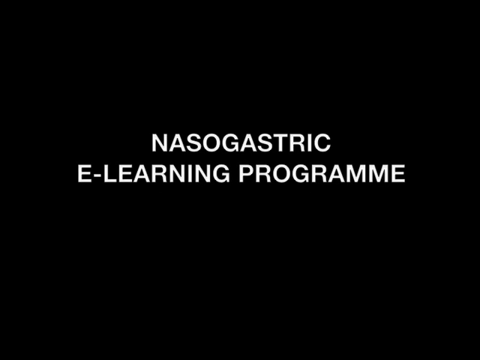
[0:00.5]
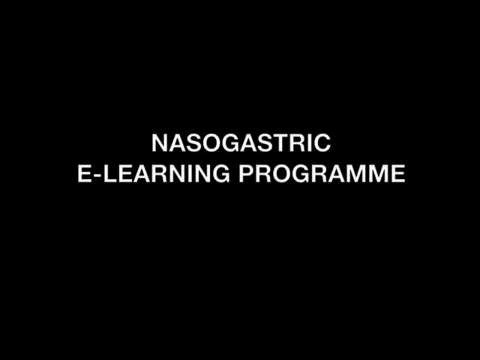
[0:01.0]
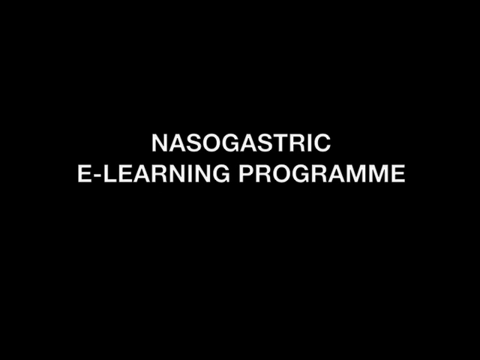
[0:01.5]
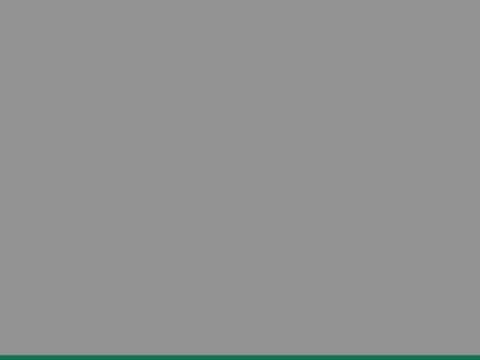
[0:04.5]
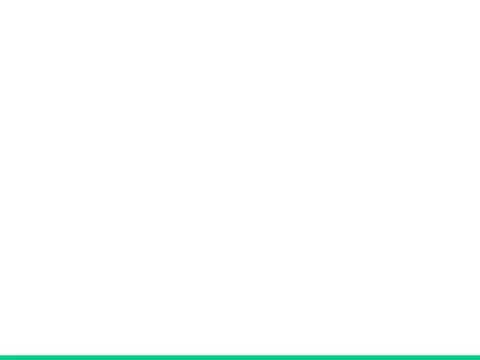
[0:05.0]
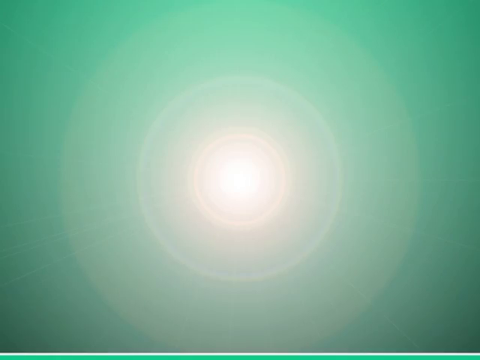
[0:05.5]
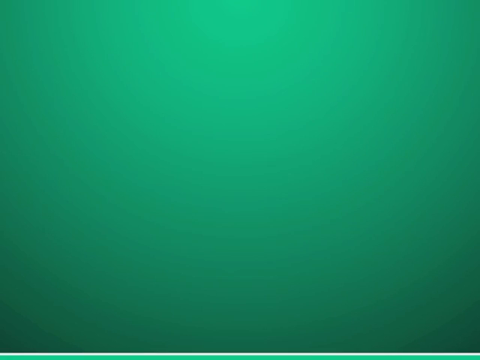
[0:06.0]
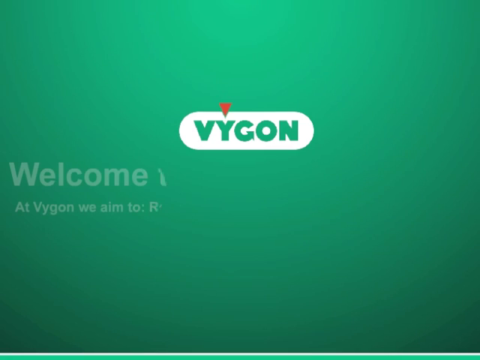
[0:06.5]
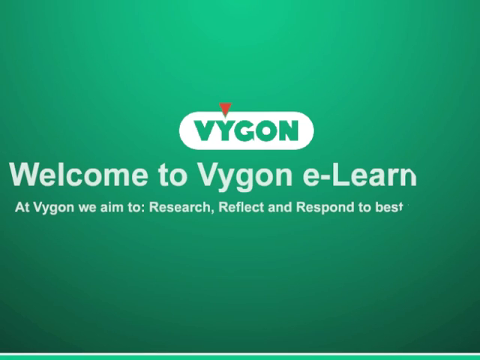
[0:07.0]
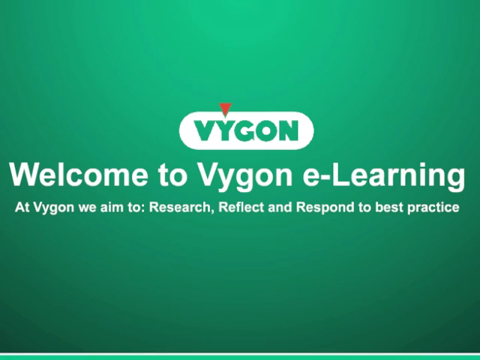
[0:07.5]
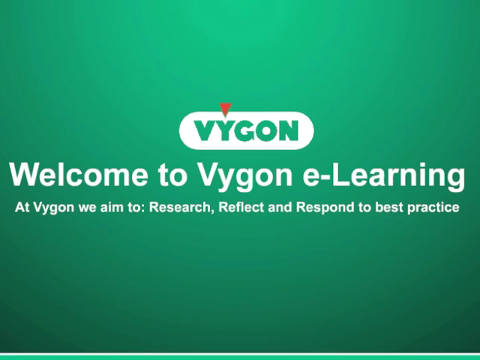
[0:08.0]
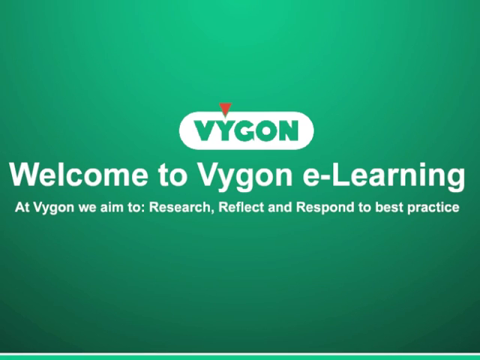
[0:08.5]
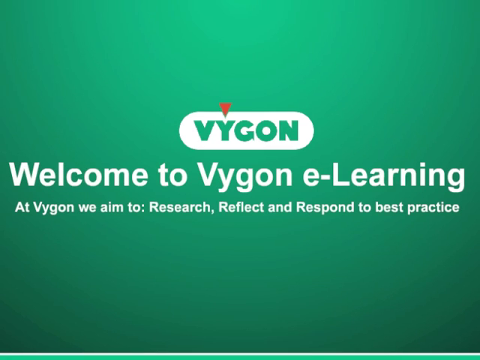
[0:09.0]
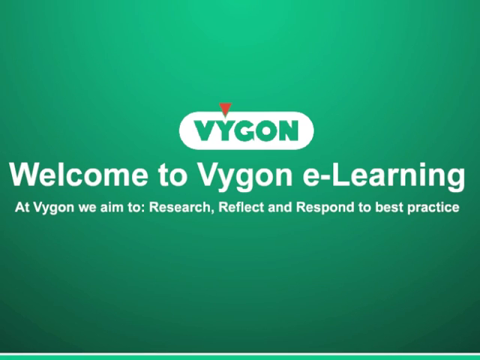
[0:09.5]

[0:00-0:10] The video opens on a black background with white text in all caps: "nasogastric" and, on the next line, "e-learning program". The screen turns black and then bluish green, and a logo appears with the letters V-Y-G-O-N in green on a white ellipse background, with an upside-down reddish-orange triangle above the letter Y. Text appears below the logo from left to right: "Welcome to Vygon E-Learning". Smaller text beneath it reads "At Vygon, we aim to research, reflect, and respond to best practice." A greenish-blue horizontal line runs across the bottom of the screen.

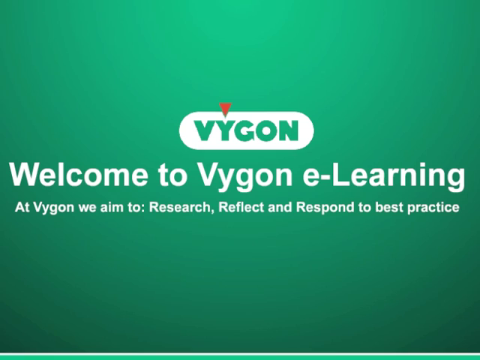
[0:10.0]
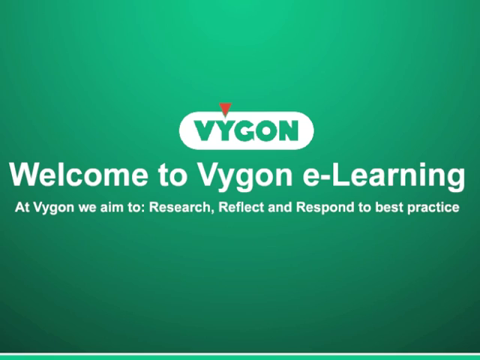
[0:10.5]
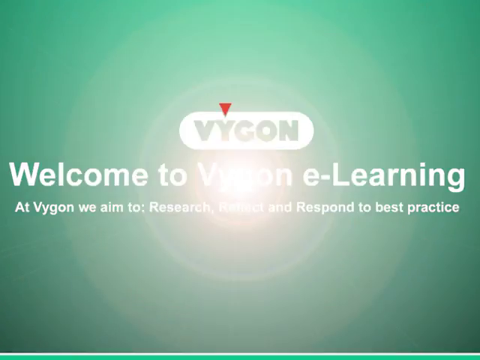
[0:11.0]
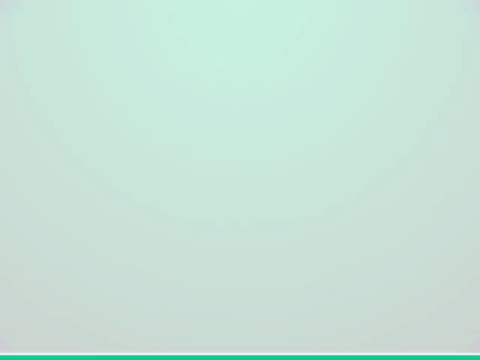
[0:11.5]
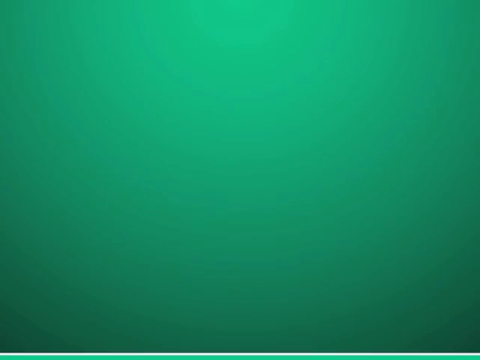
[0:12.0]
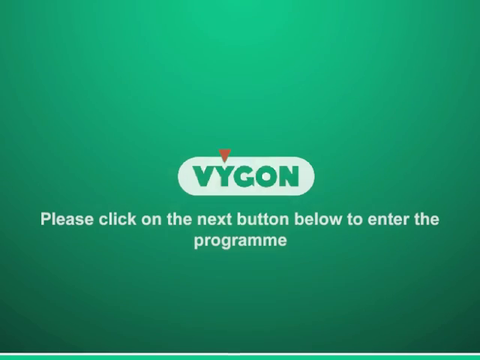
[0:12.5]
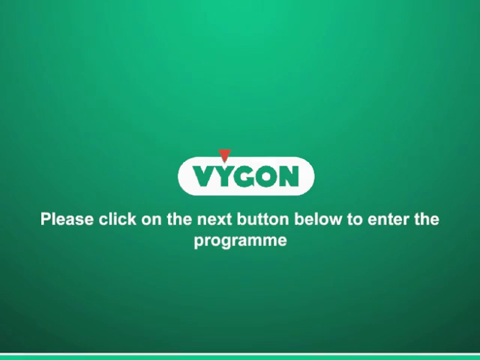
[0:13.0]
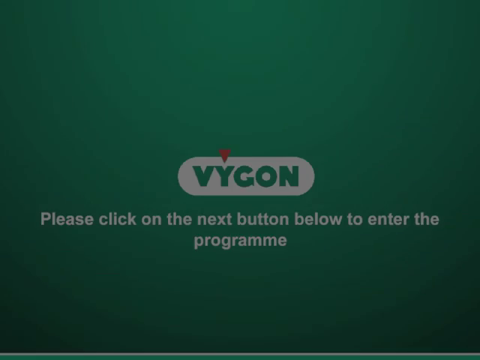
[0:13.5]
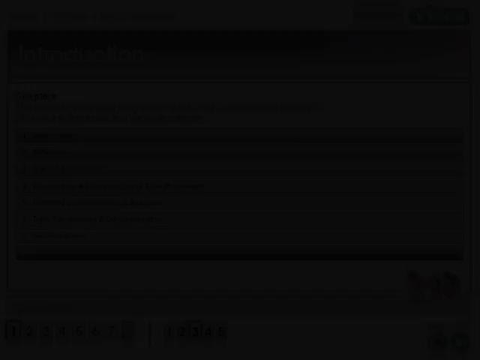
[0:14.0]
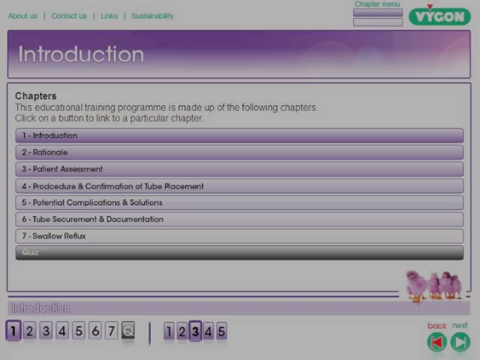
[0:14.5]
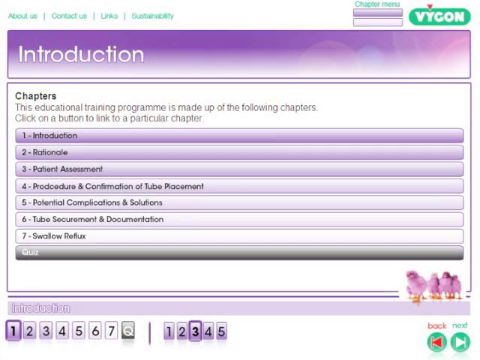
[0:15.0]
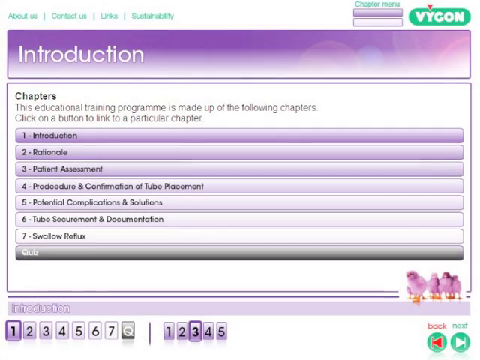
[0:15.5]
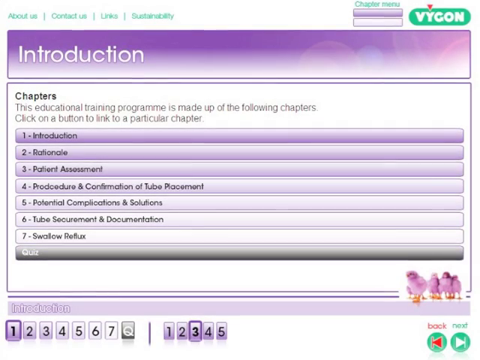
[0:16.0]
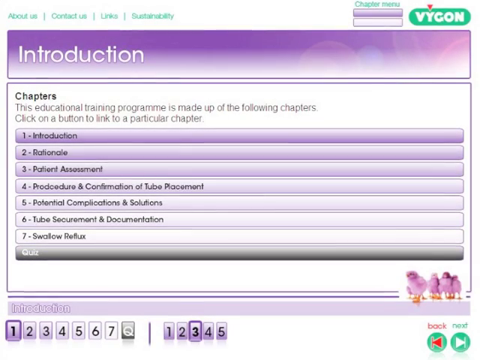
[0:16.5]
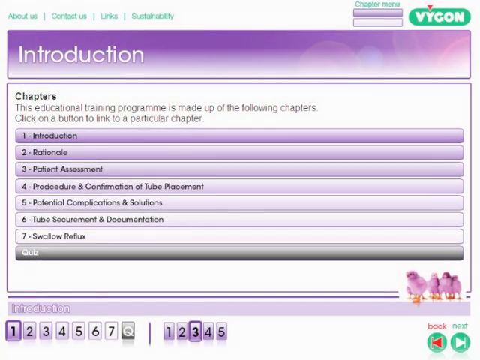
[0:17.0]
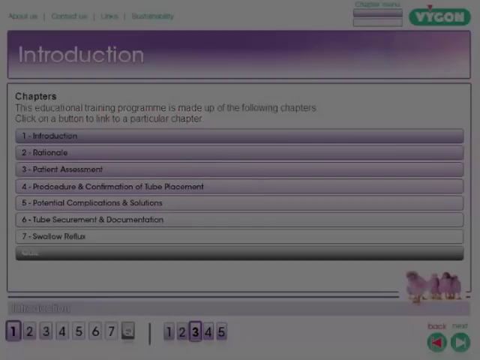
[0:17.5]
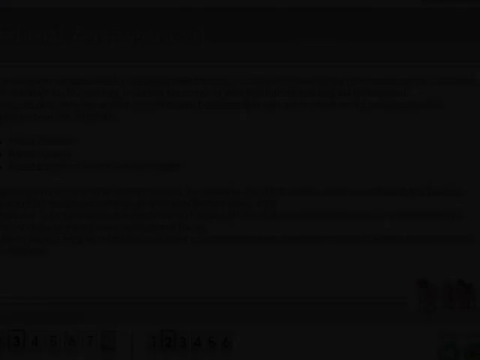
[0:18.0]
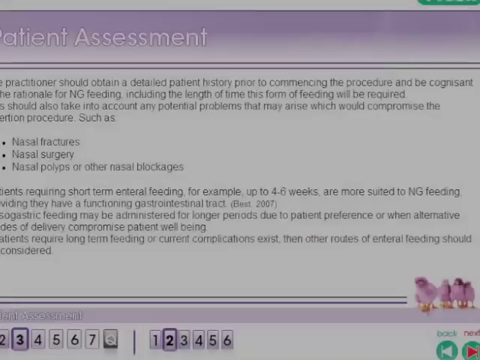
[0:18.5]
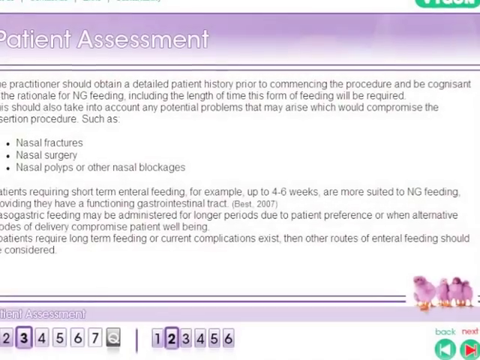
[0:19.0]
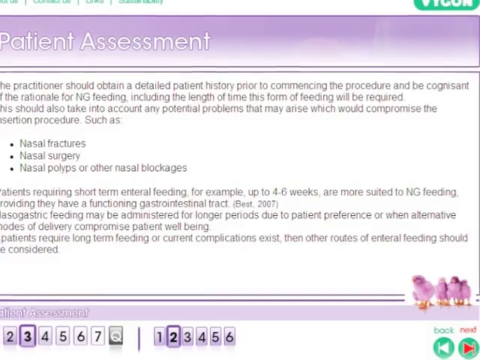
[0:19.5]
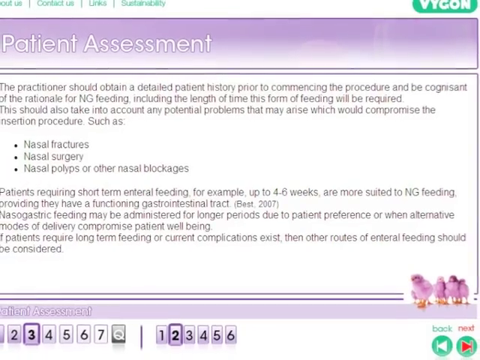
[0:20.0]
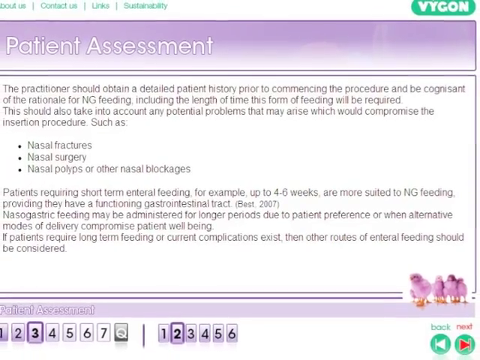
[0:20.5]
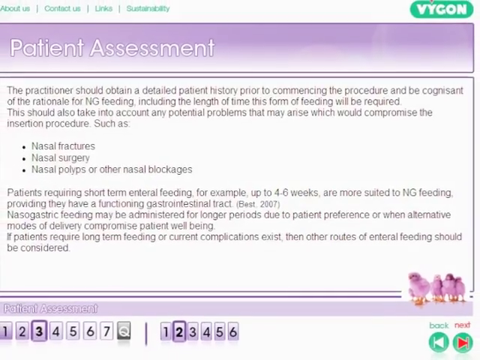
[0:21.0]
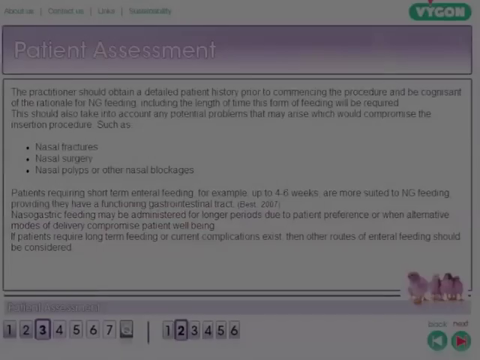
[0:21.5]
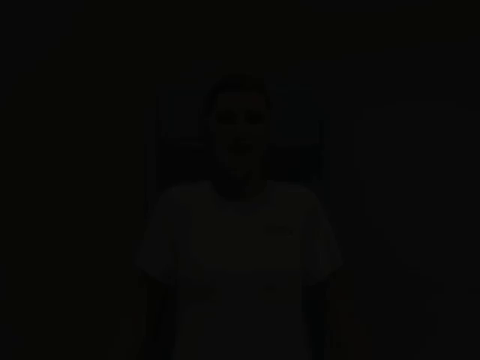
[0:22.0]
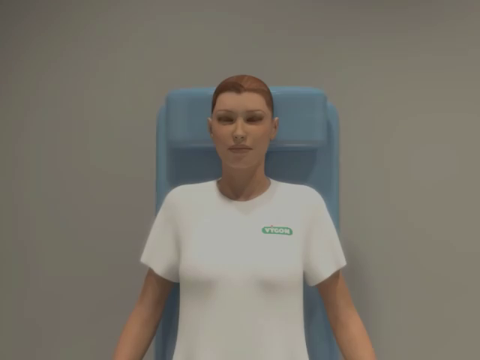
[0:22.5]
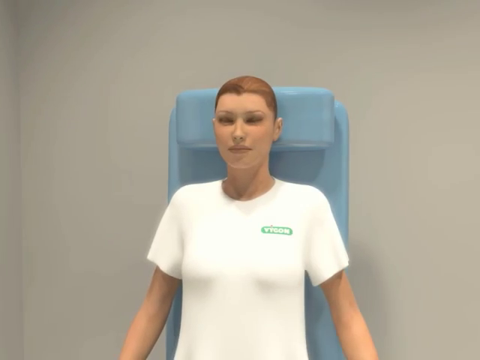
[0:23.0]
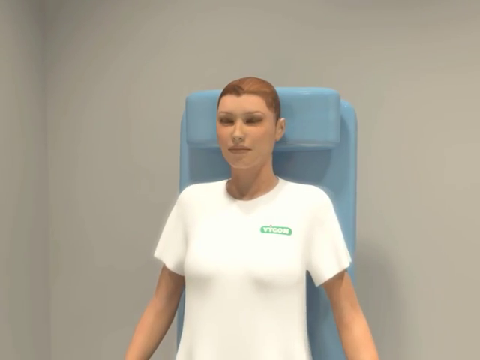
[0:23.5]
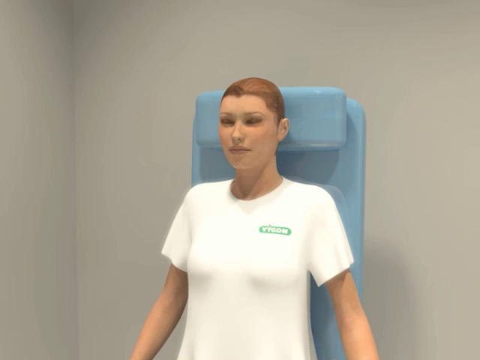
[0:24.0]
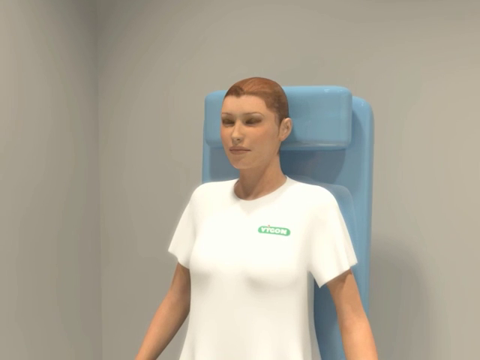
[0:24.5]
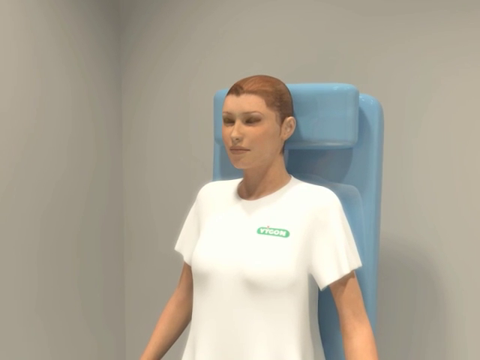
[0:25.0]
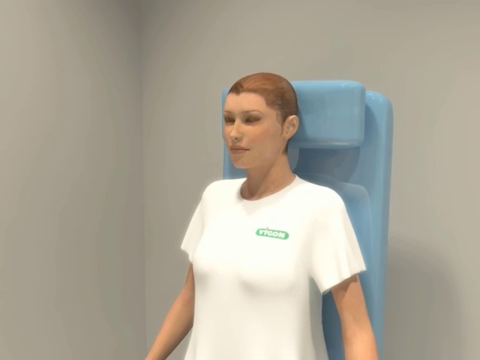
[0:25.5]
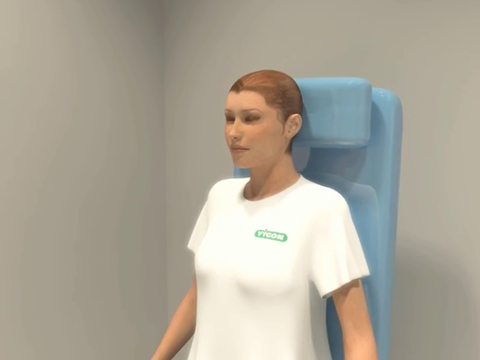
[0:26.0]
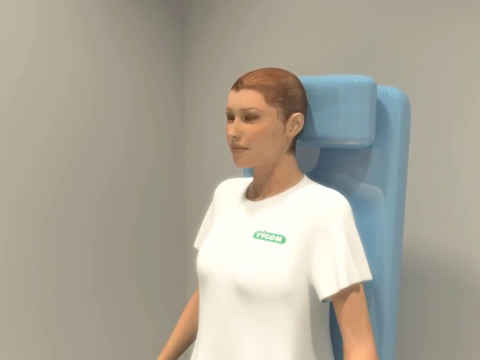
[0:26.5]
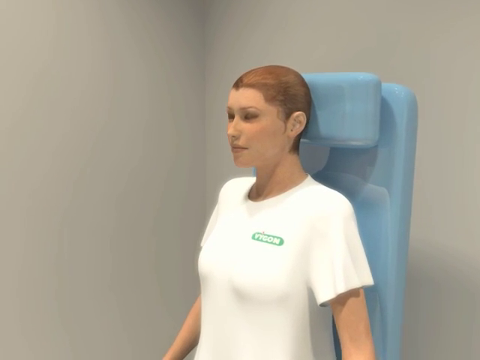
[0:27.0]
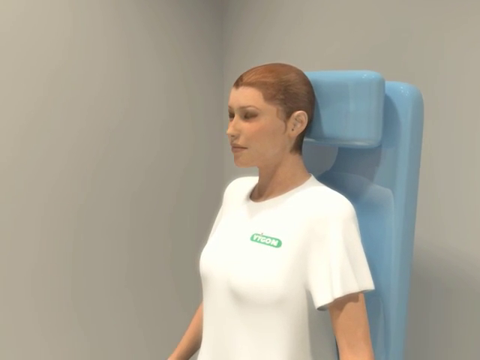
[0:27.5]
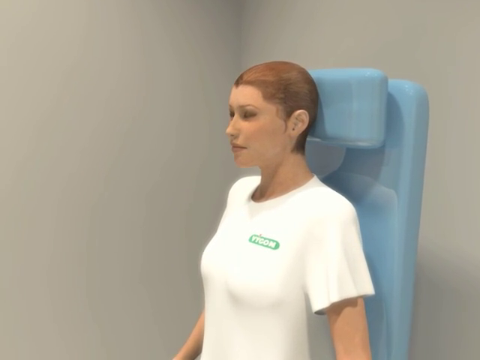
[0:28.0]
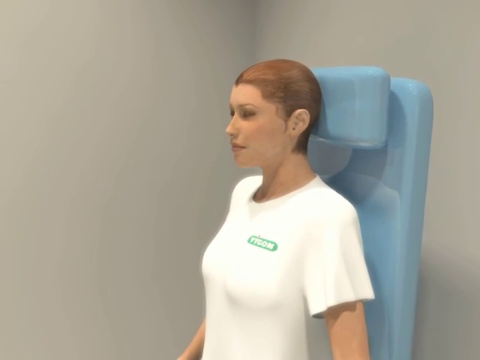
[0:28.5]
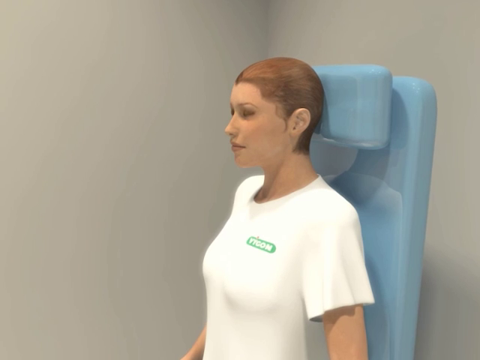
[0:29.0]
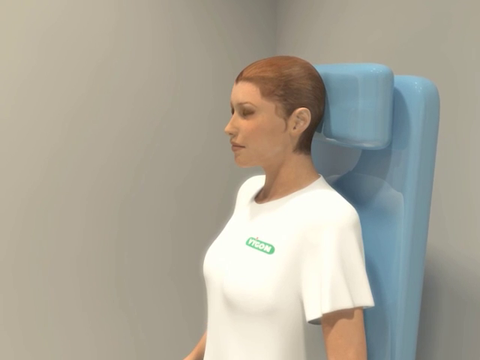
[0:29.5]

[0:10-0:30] On a bluish-green background, a logo in the center shows the letters V-Y-G-O-N in green on a white ellipse background, with a small reddish-orange upside-down triangle above the Y. Below the logo is the text "Welcome to Vygon eLearning", and below that, "At Vygon, we aim to research, reflect, and respond to best practice." A bright white circle in the center slowly grows until it takes up the whole screen. The background then returns to greenish blue, with a small bright white light in the center surrounded by yellow rings, several concentric circles. The Vygon logo appears again with white text below it: "Please click on the next button below to enter the program." A webpage follows with the heading "Introduction" and a list of chapters in the e-learning module, then a webpage with the heading "Patient Information". Next, a 3D simulation of a patient on a blue bed appears, and the patient and bed rotate to the left.